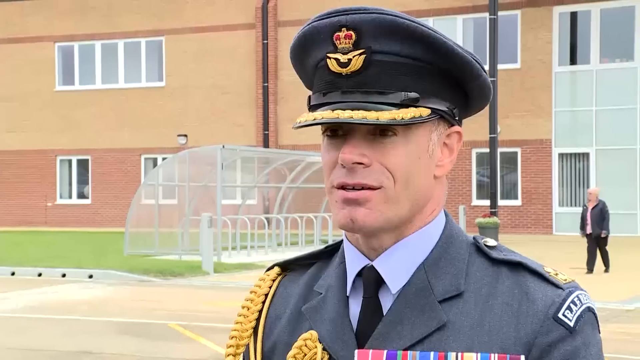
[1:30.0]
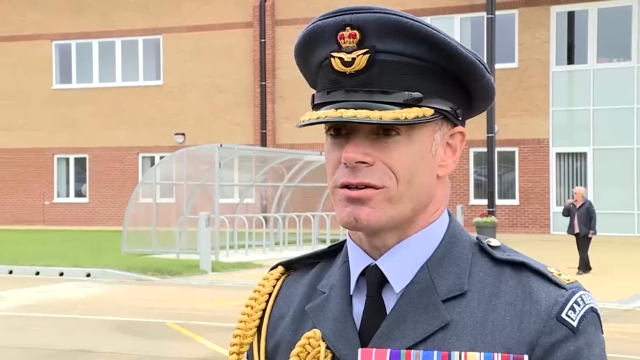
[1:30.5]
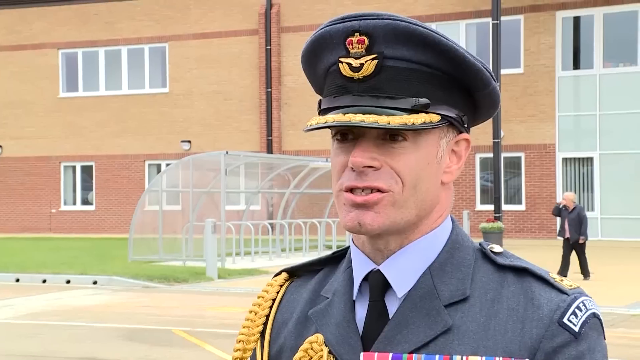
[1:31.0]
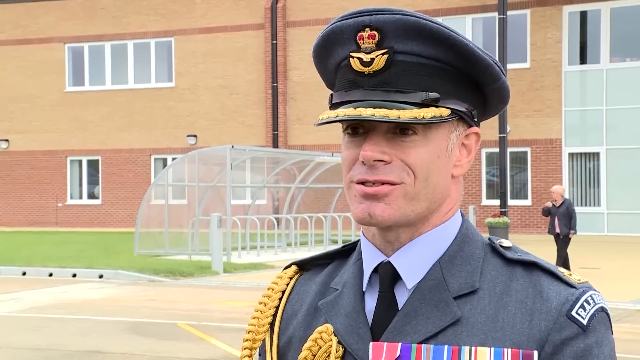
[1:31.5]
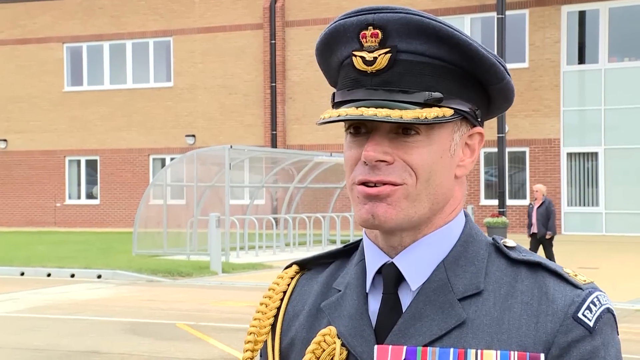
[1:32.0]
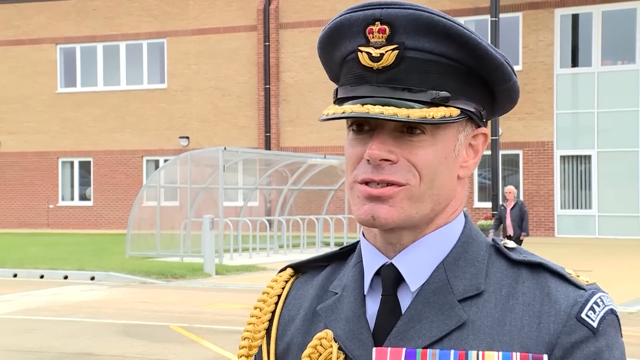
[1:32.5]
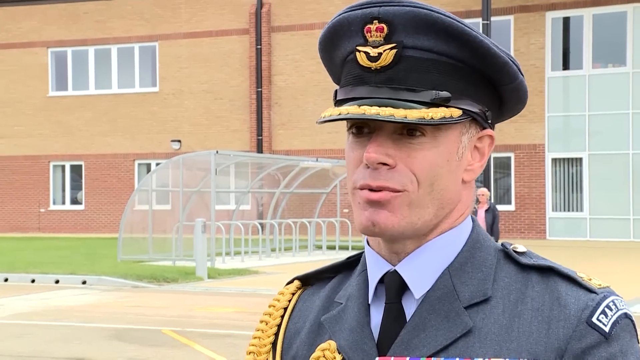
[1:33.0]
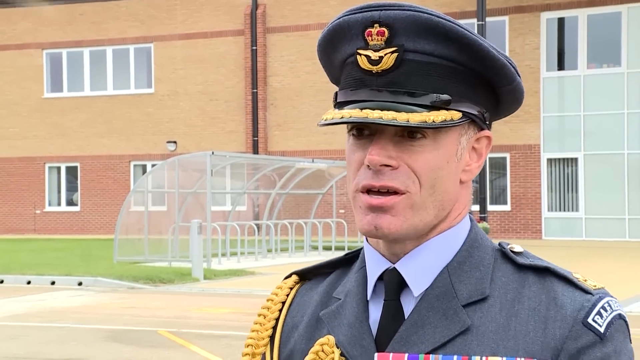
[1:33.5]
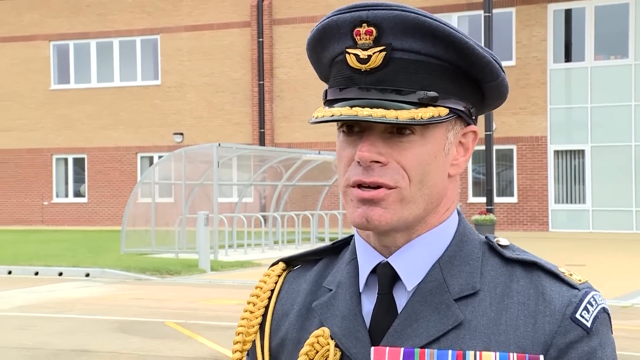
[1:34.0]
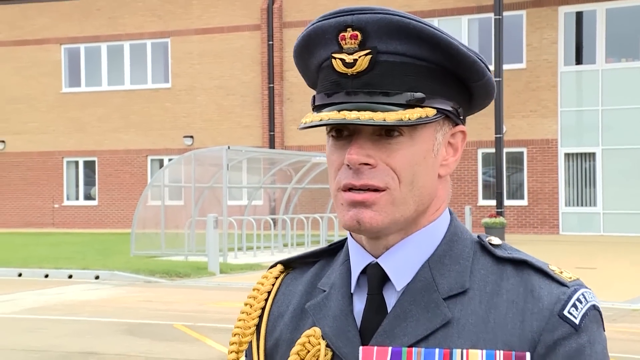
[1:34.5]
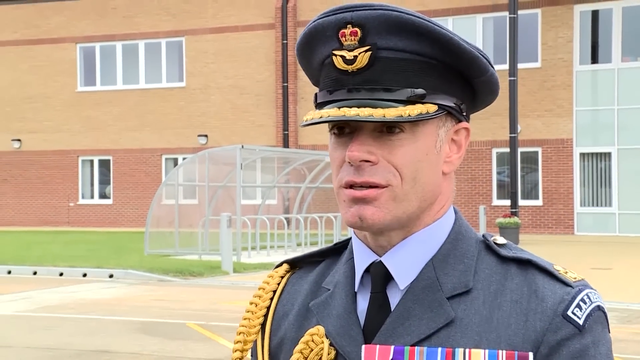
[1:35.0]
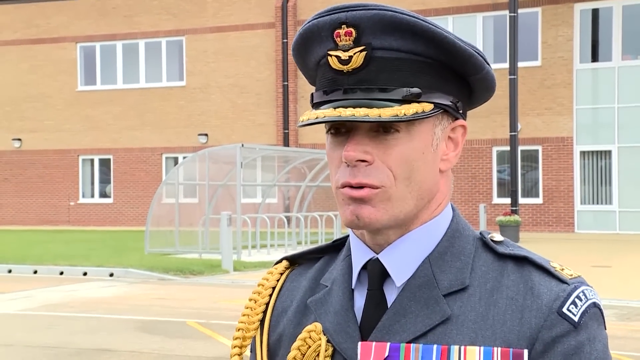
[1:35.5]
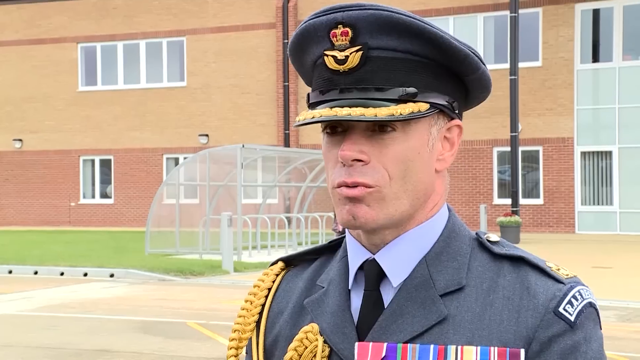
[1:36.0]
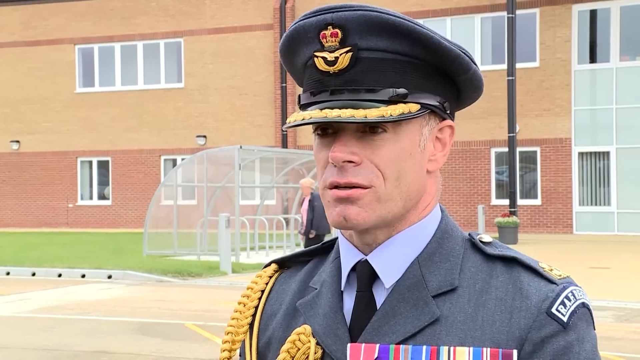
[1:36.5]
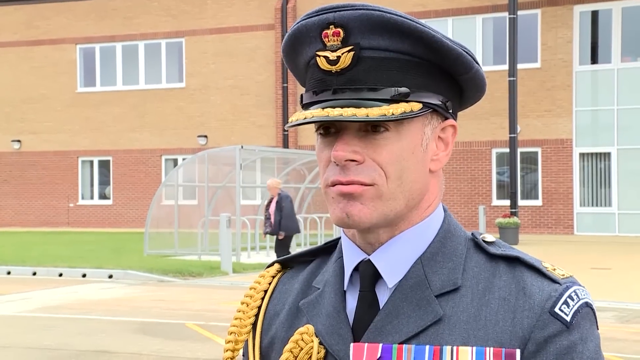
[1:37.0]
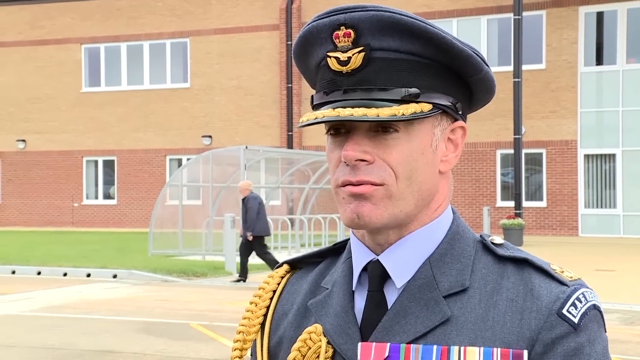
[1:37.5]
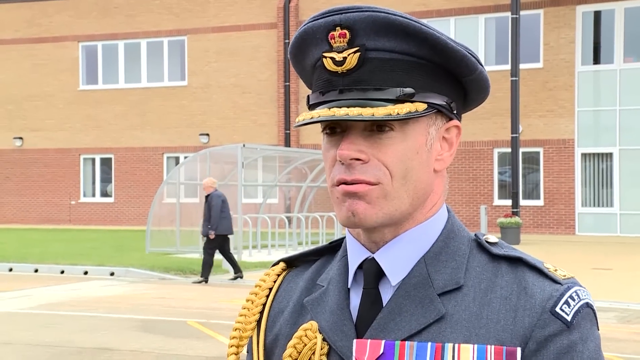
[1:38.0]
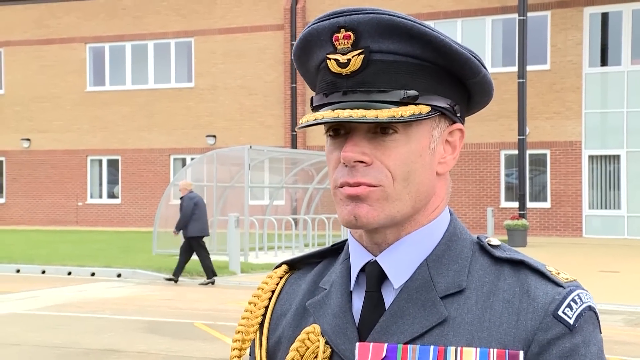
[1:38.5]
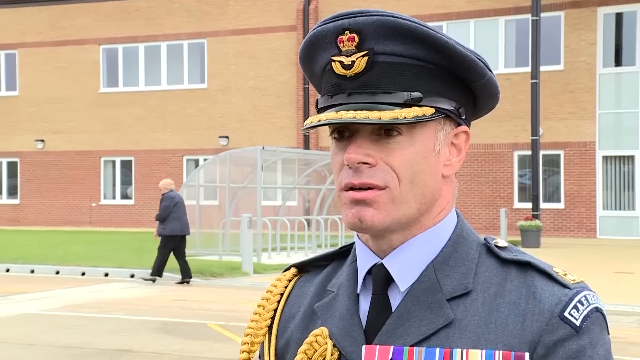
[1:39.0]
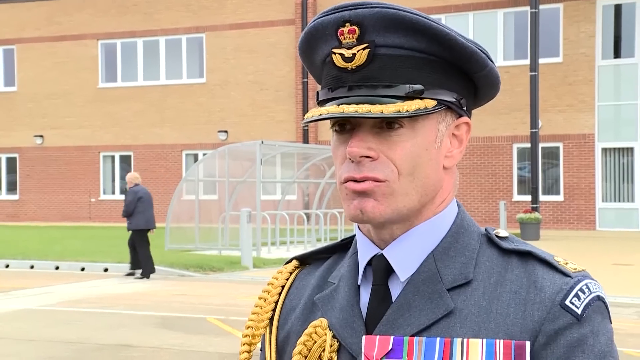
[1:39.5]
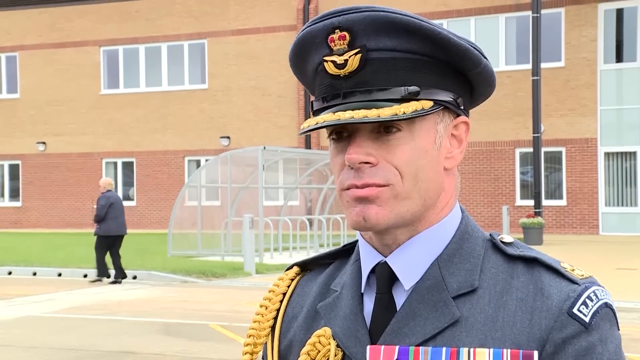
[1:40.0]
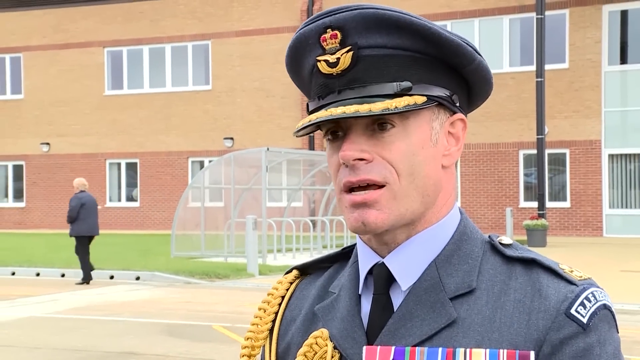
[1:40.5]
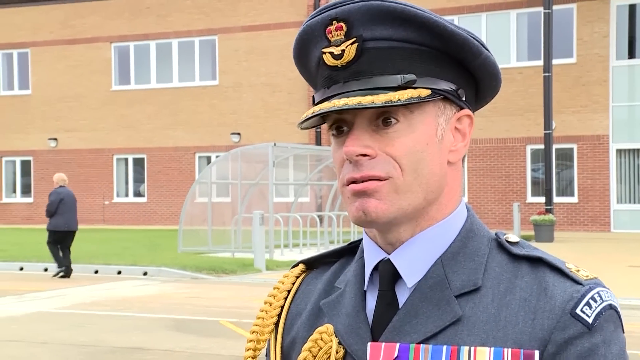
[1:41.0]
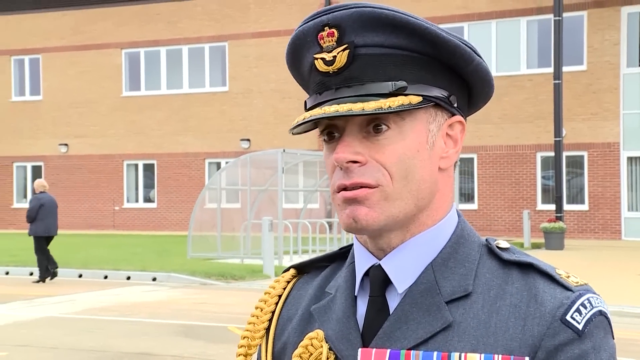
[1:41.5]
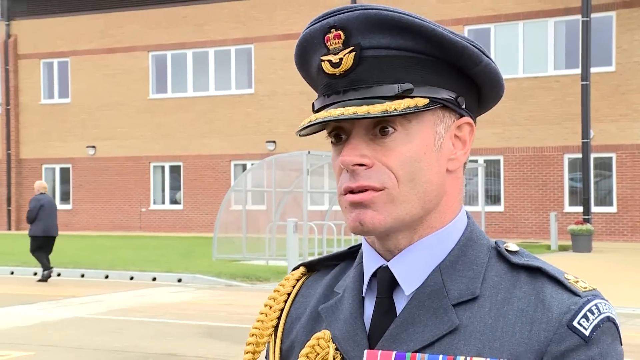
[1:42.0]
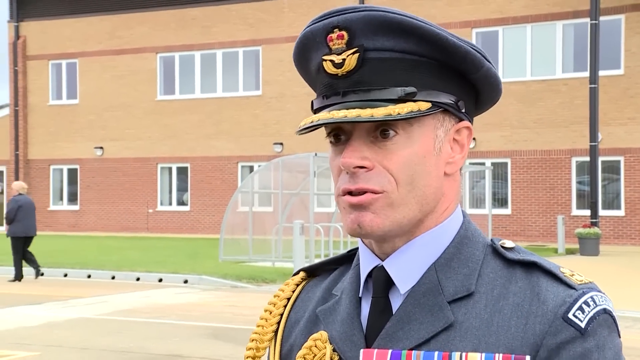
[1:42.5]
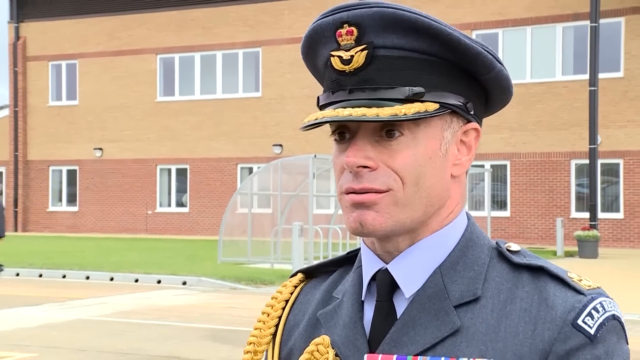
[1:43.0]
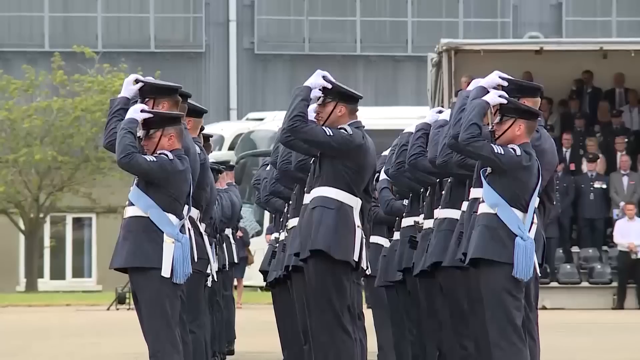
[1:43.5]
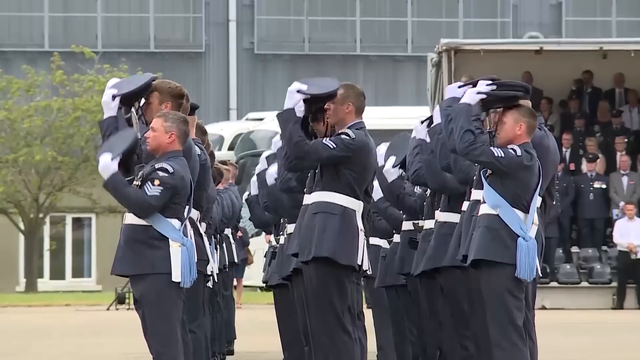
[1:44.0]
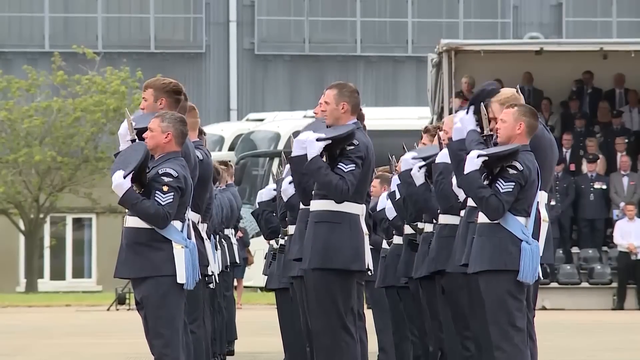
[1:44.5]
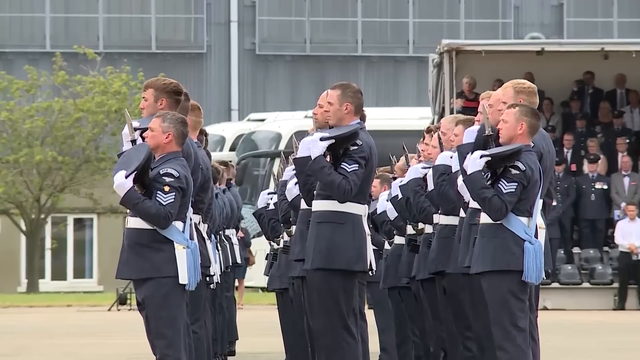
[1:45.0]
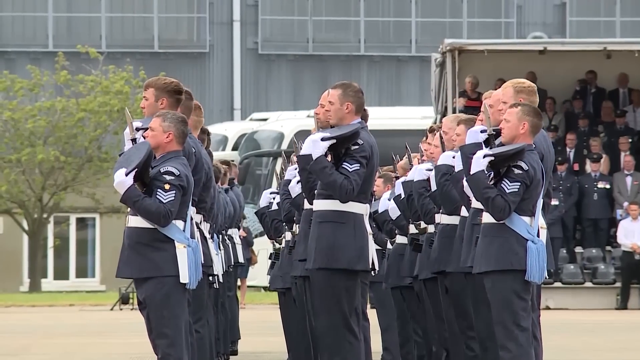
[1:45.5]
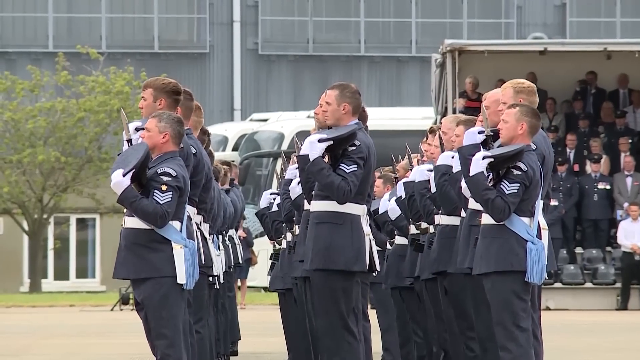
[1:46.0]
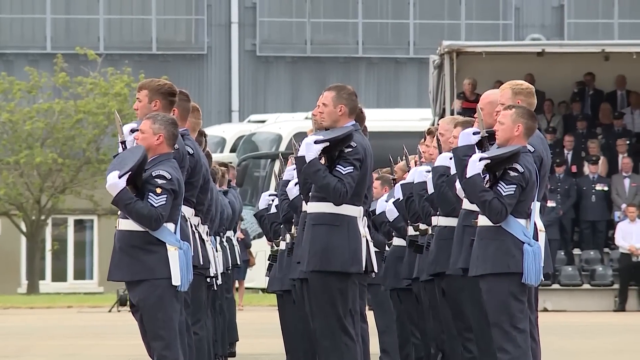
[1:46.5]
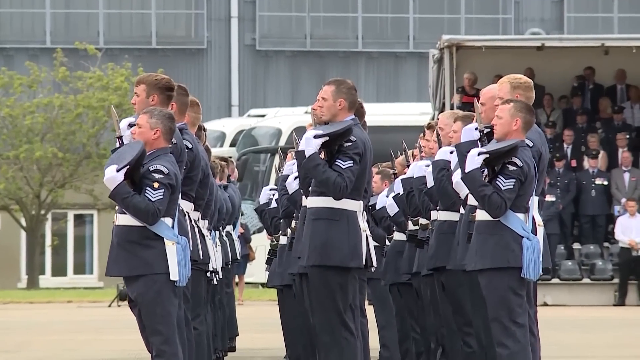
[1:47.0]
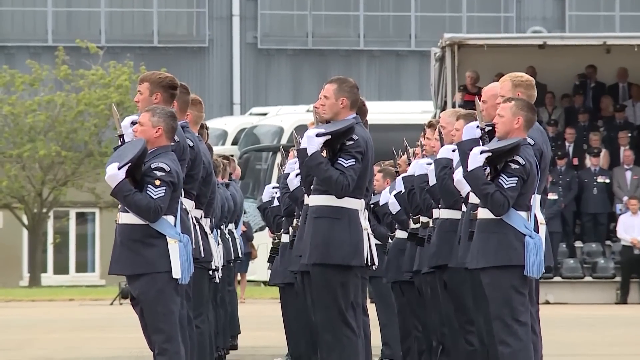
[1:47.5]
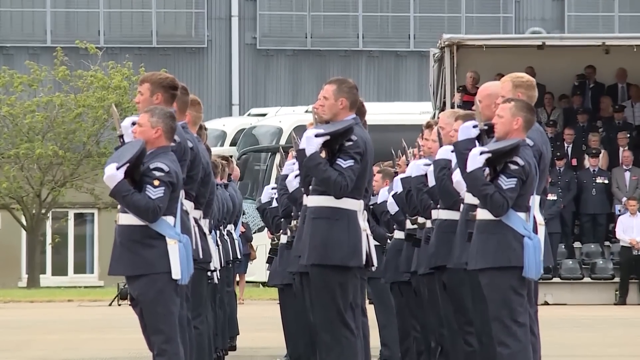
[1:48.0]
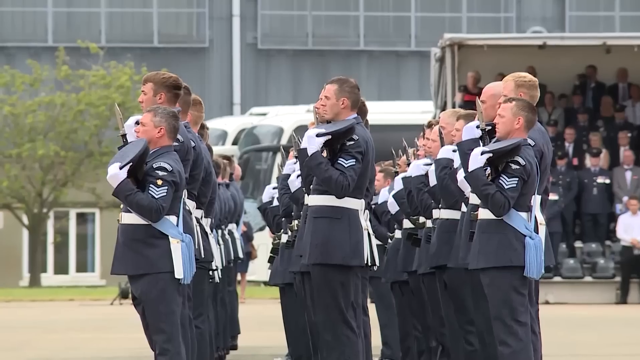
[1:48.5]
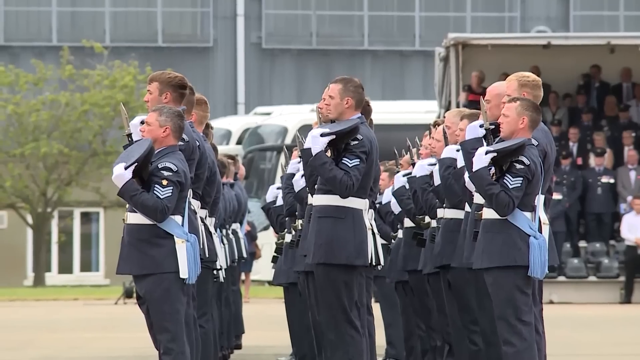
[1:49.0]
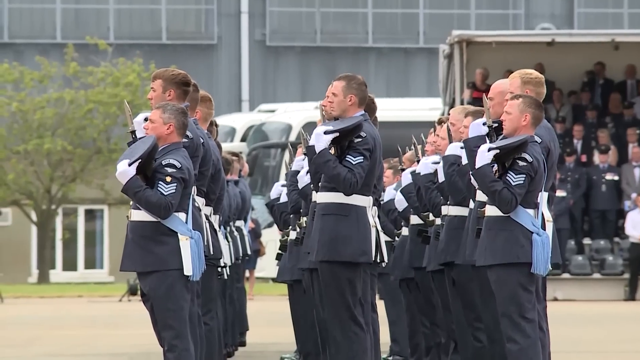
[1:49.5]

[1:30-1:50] At a military ceremony event, a man in military uniform, a kind of military suit with golden rope-like pieces on it, wears a flat peaked cap and is stood in front of what is probably a military building. A woman with grey hair walks behind in the background; it looks quite windy, and she is walking against the wind. The blonde hair of the person interviewing the man is visible, blown by the wind in front of the camera. The scene then returns to the ceremony, where three rows of military personnel have just taken their hats off and hold them on their left shoulders, all looking to the left. White vehicles are in the background, along with a small, covered, tiered seating section with people stood up watching the ceremony.